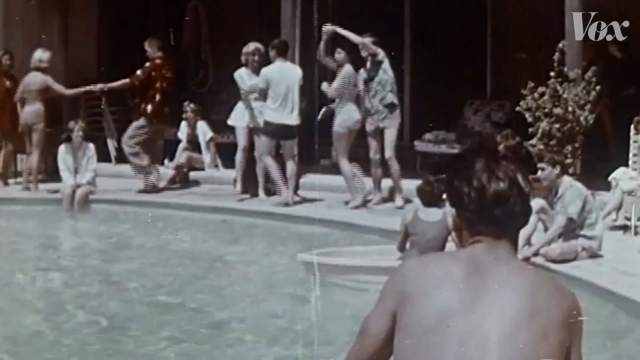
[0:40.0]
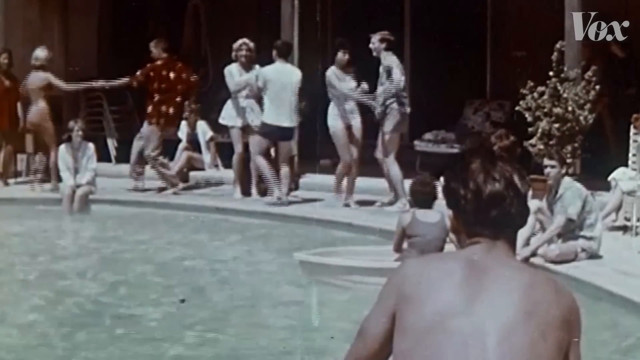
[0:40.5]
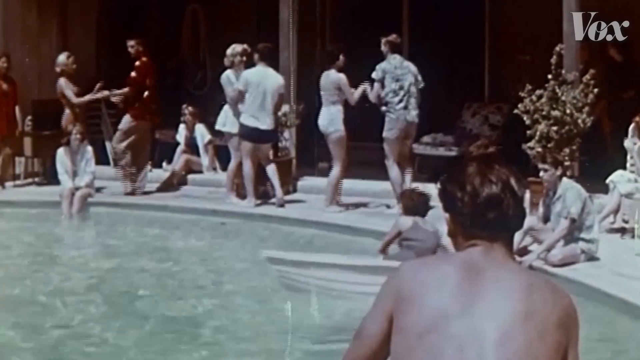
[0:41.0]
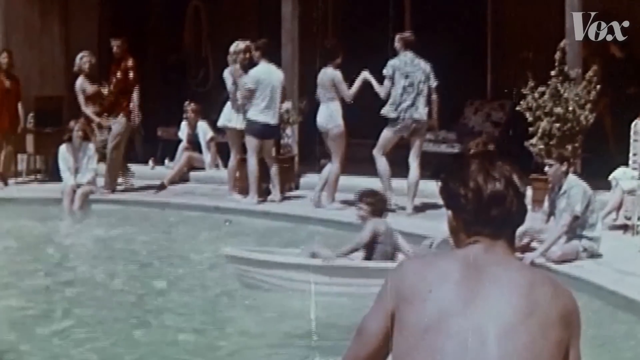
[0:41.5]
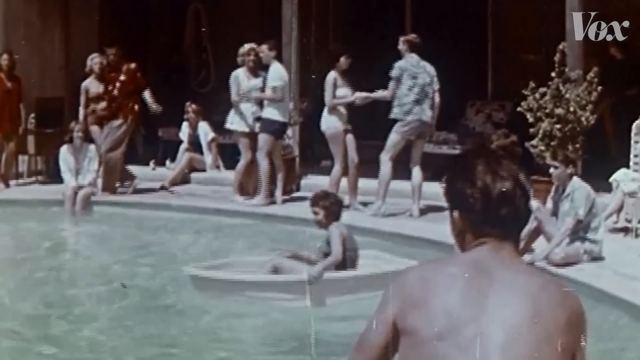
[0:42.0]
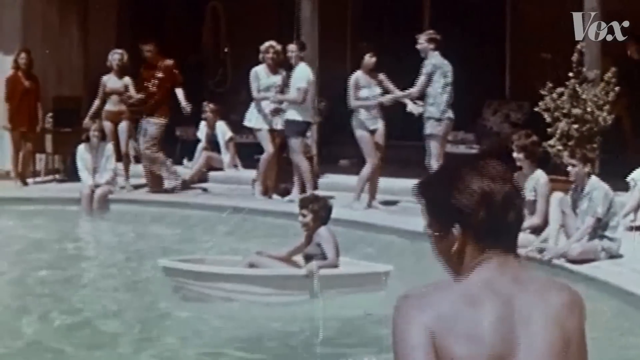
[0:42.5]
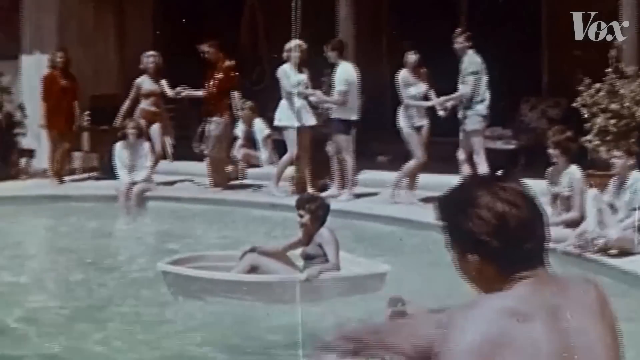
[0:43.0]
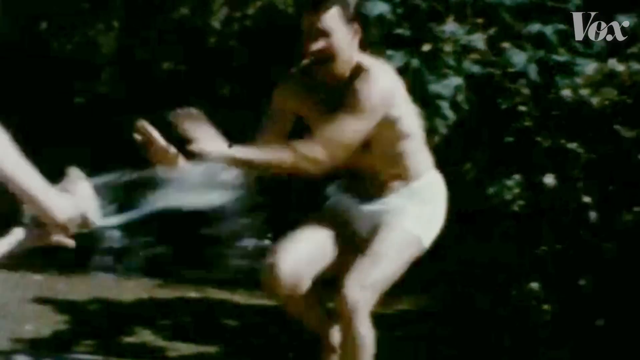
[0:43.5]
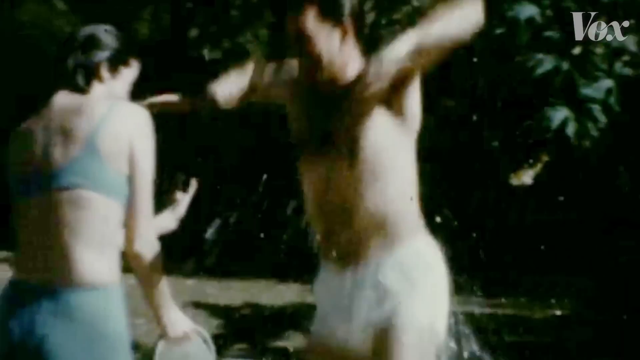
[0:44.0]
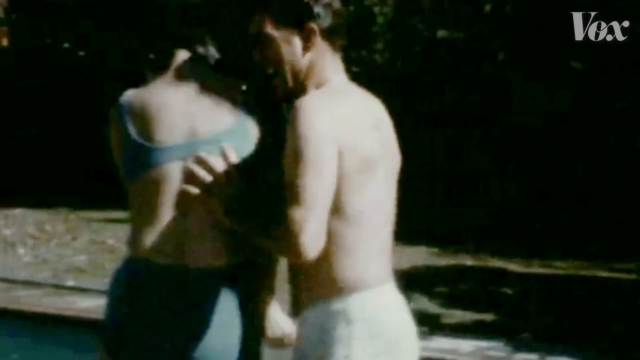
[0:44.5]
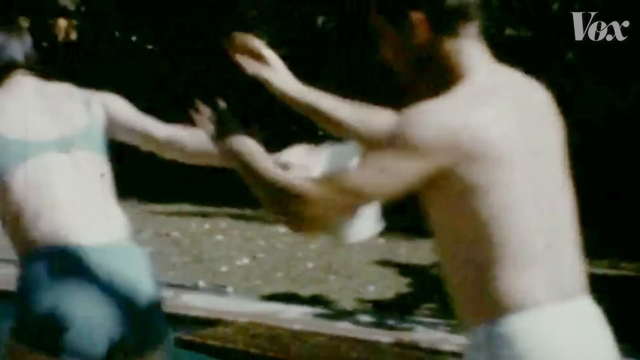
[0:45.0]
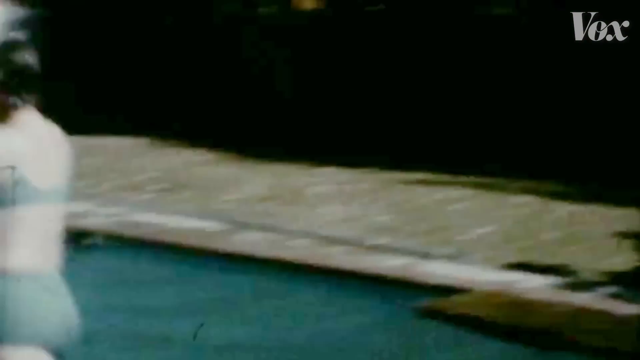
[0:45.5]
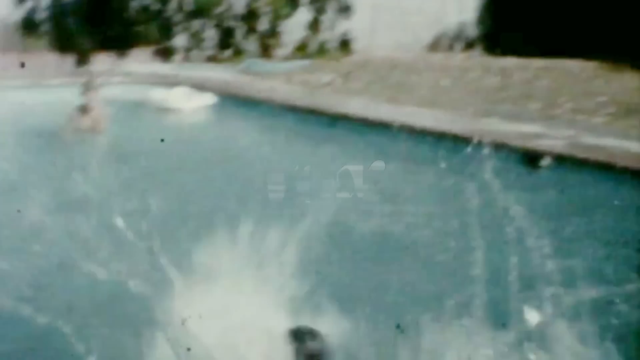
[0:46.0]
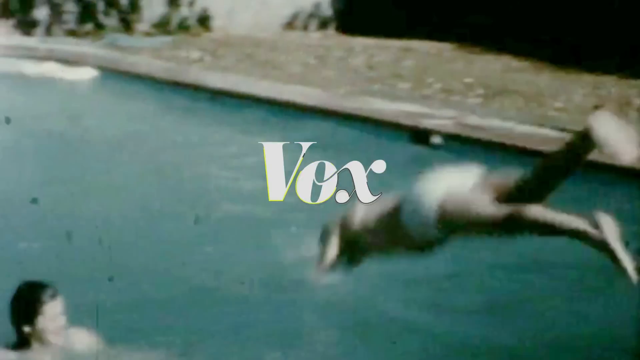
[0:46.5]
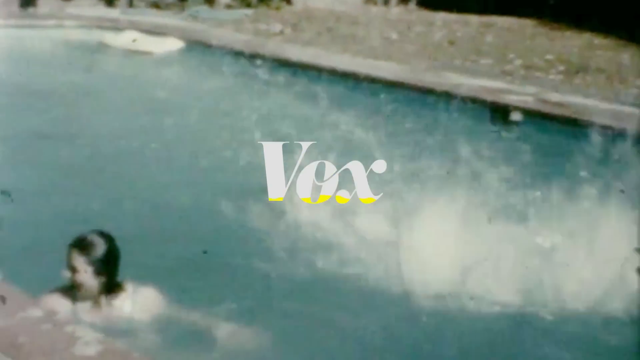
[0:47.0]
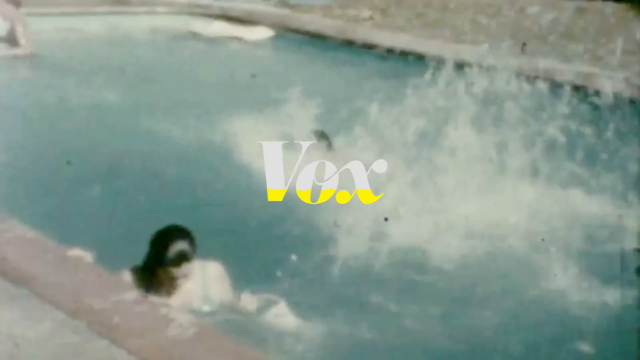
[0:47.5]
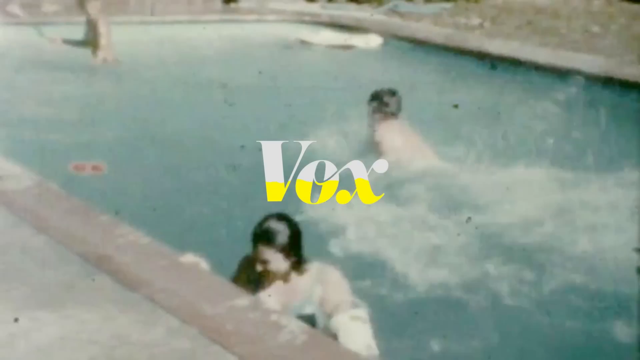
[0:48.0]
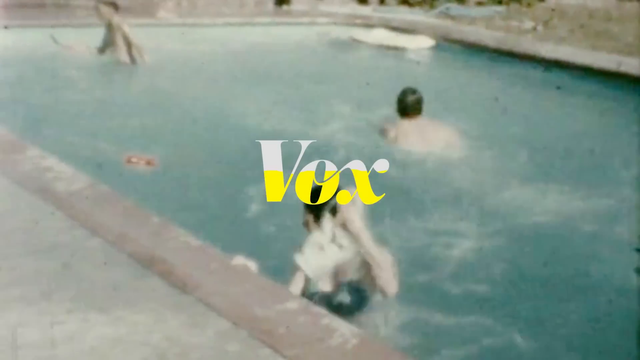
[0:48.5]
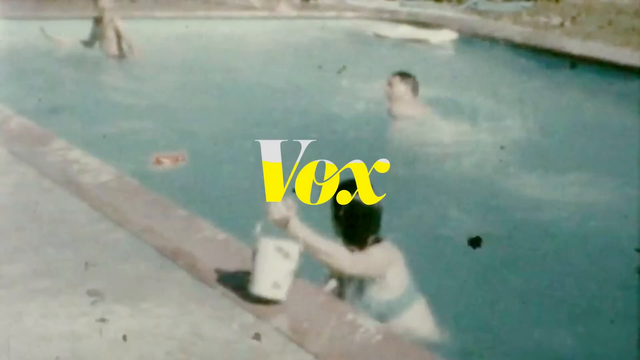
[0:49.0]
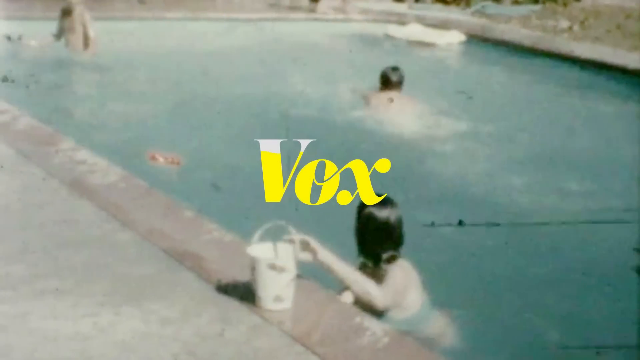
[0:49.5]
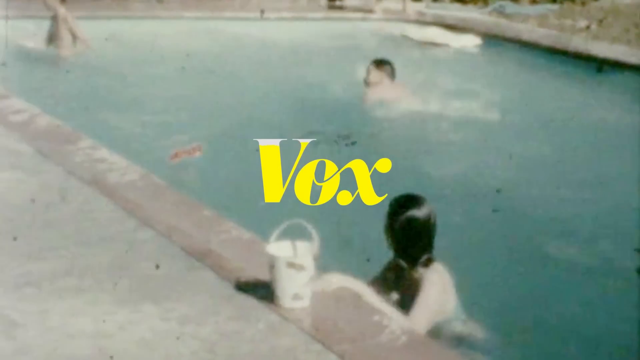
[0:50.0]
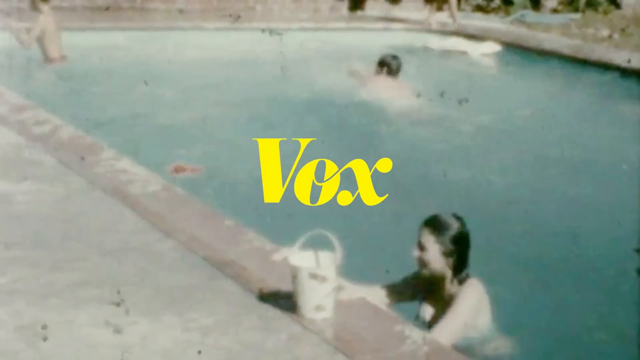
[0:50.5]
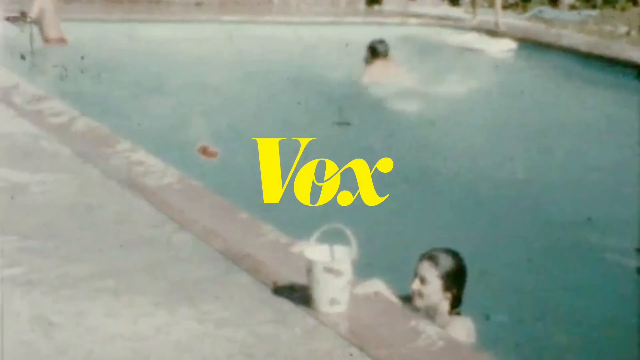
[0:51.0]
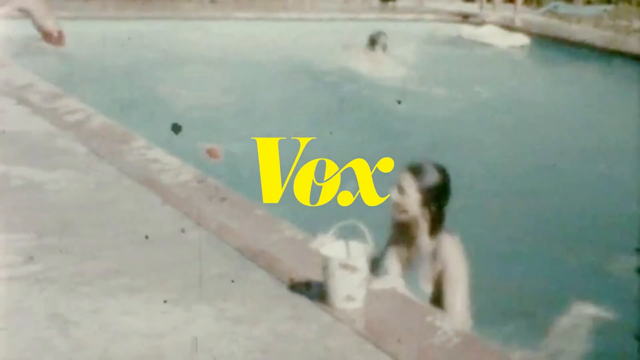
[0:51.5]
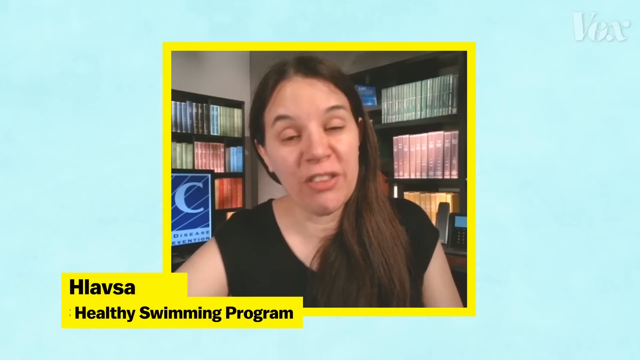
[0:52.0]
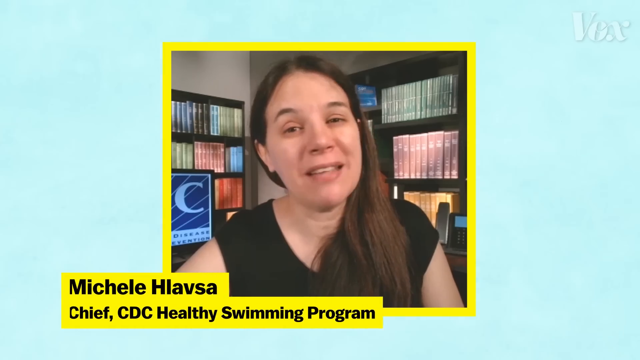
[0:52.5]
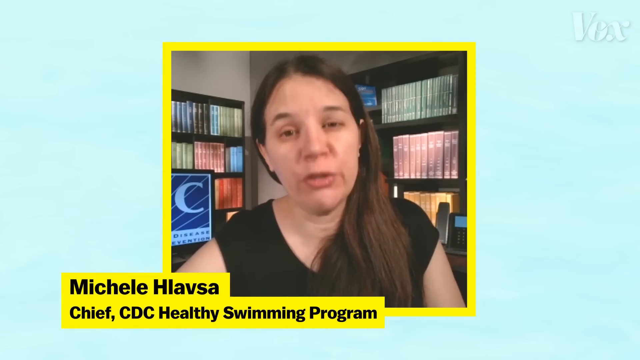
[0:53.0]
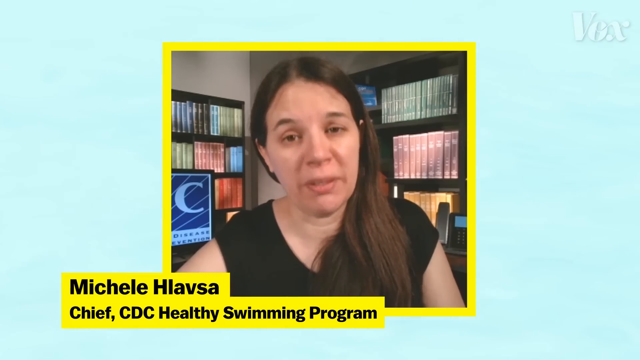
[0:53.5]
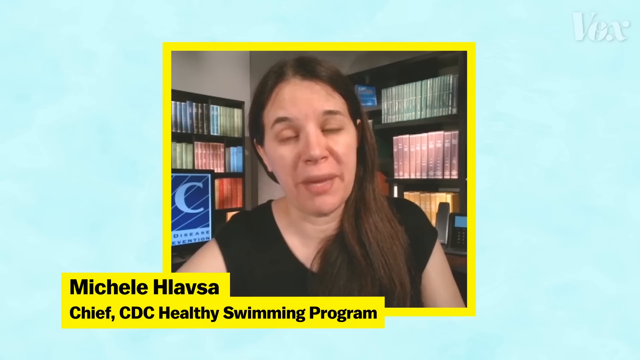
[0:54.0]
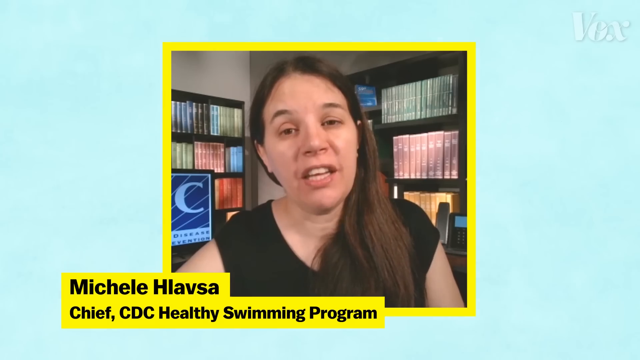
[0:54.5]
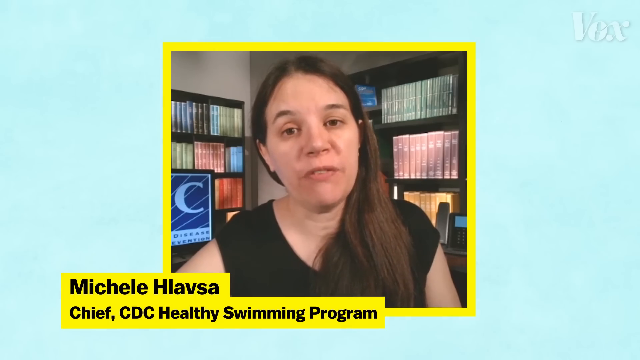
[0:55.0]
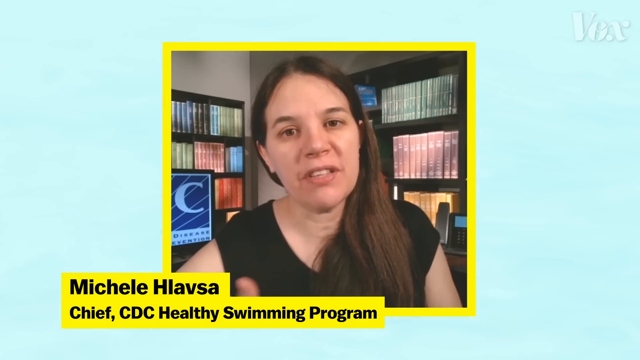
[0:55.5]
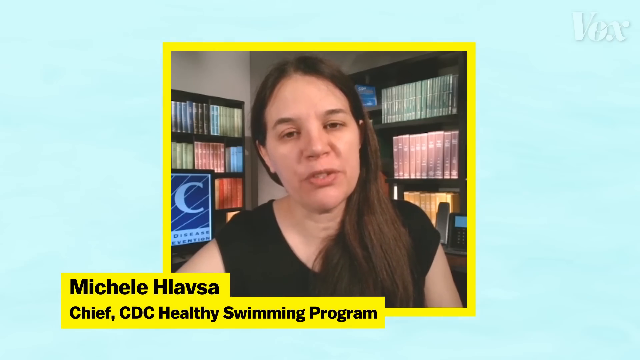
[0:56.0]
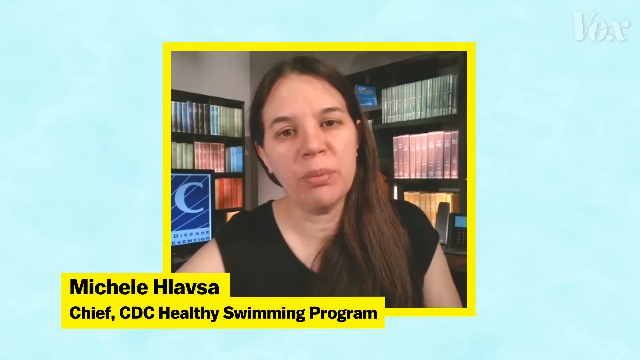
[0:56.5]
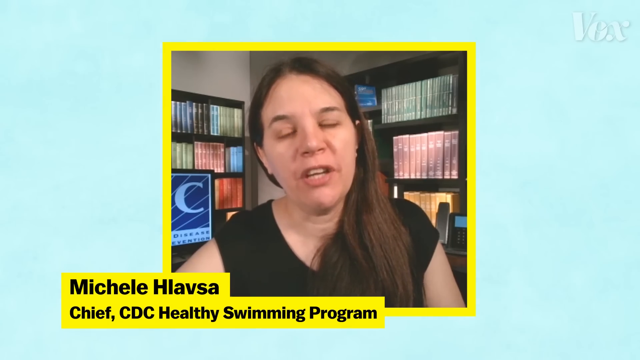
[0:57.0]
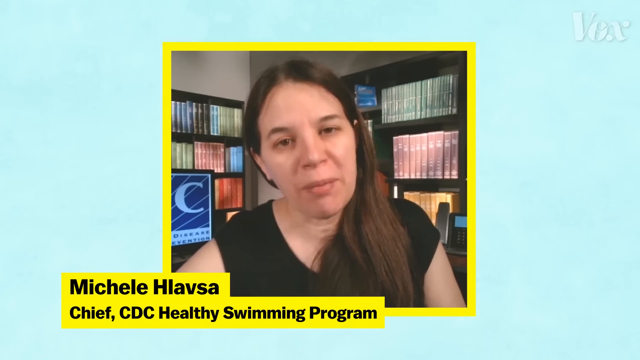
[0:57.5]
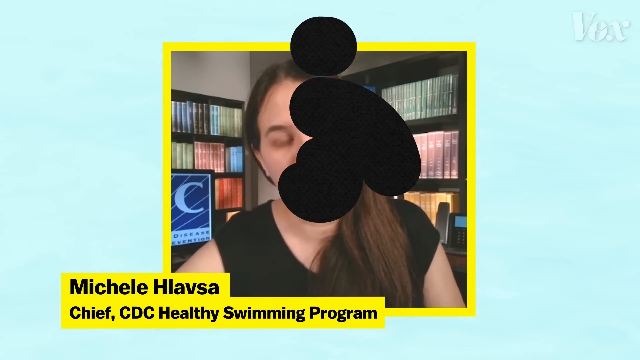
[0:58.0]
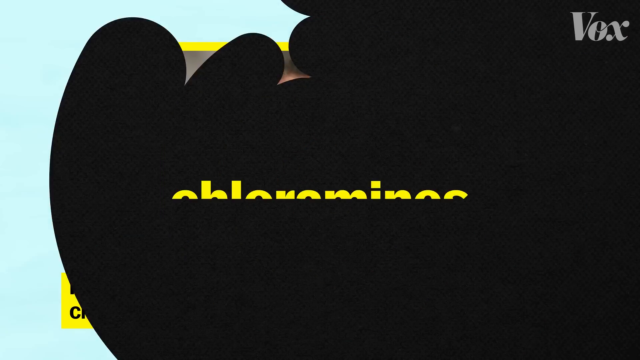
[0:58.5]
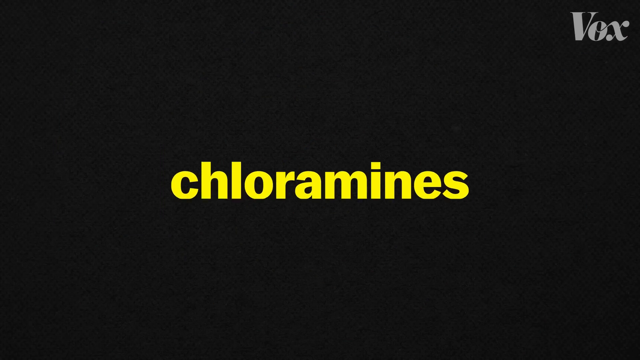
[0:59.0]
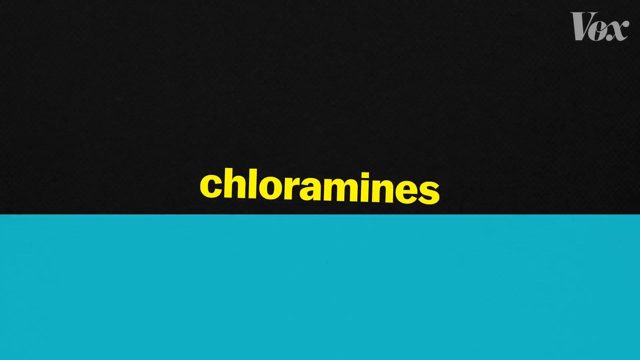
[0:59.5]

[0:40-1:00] Lots of people appear to be at a pool party in footage that looks black and white, maybe from the 60s or 70s. People on the deck dance, most of them in bathing suits, and they look like they are having a great time. Some sit on the side of the pool with their legs in the water, dancing. One woman is in what looks like a small boat in the pool, paddling. People use a hose, people jump and dive into the water, and people are pushed into the pool. Then the woman speaking appears: Michelle Hlavsa, chief of the CDC Healthy Swimming Program, speaking directly into the camera. The video then goes to a blue screen with "chloramines" in yellow block lettering, as what look like little beads of water come down the screen.